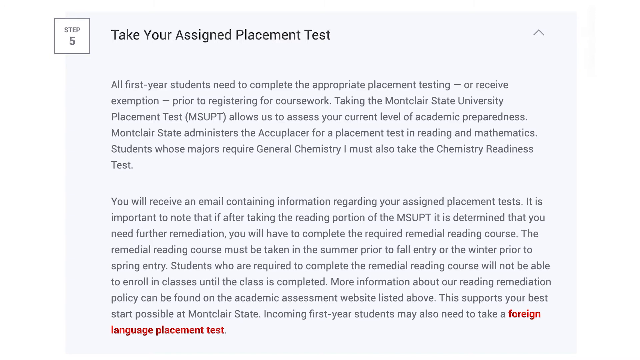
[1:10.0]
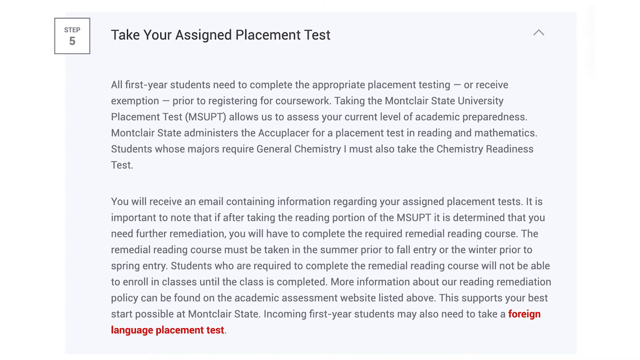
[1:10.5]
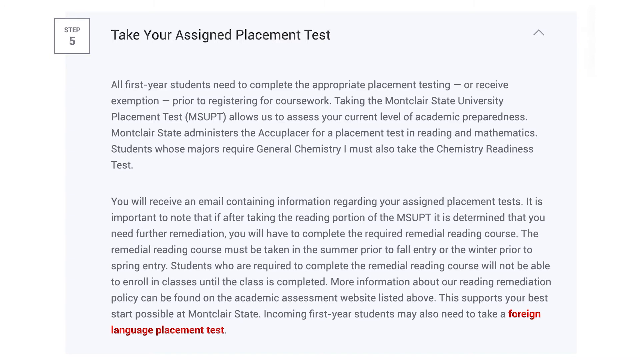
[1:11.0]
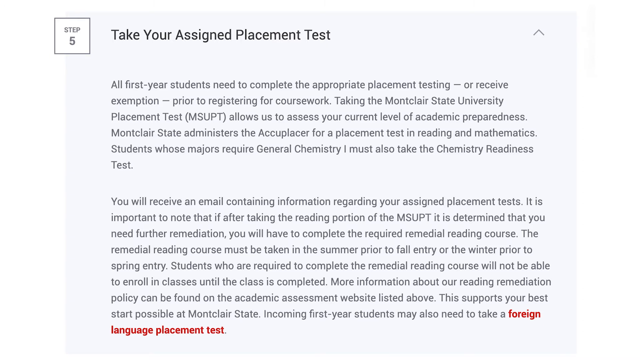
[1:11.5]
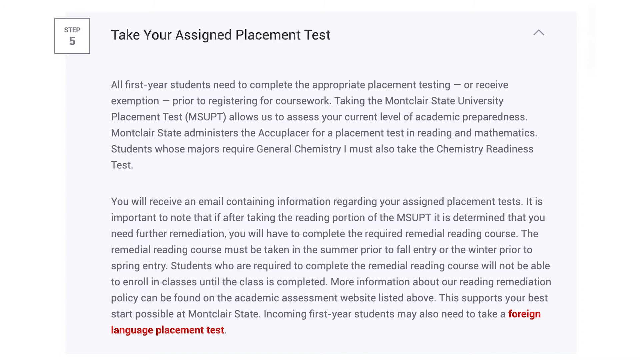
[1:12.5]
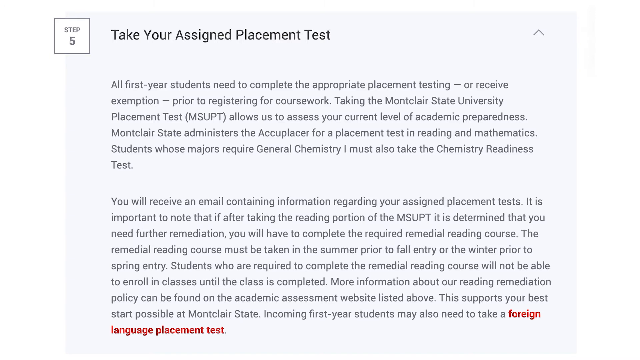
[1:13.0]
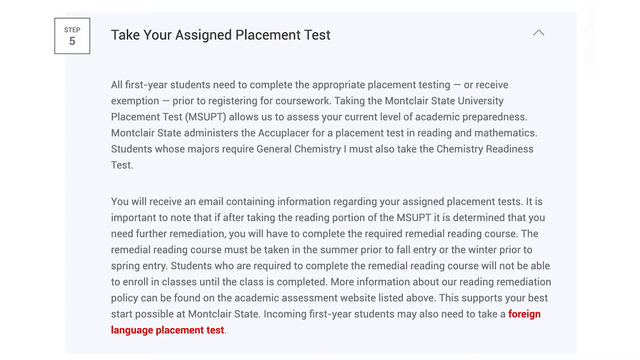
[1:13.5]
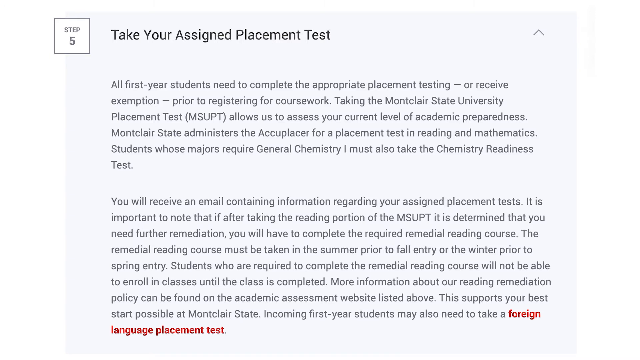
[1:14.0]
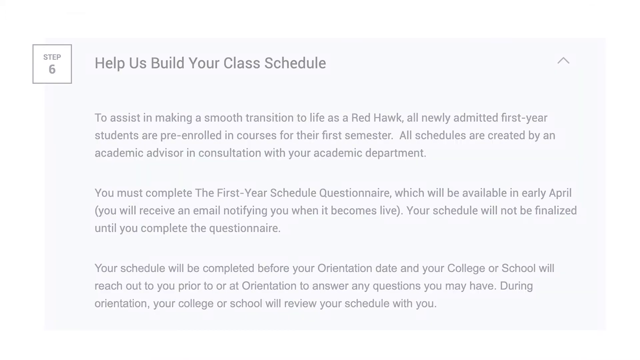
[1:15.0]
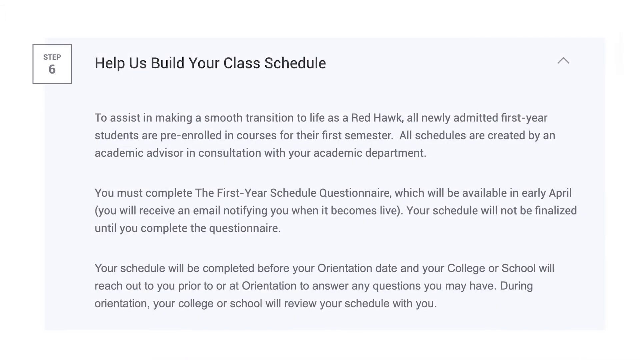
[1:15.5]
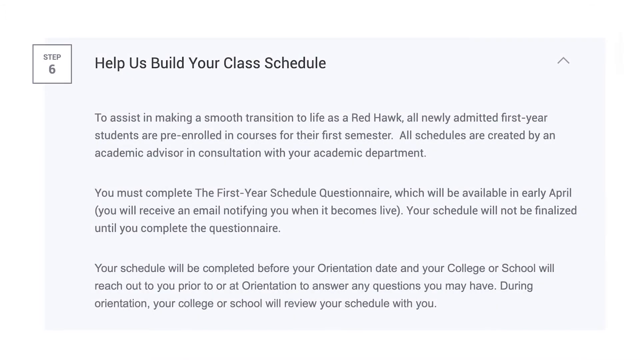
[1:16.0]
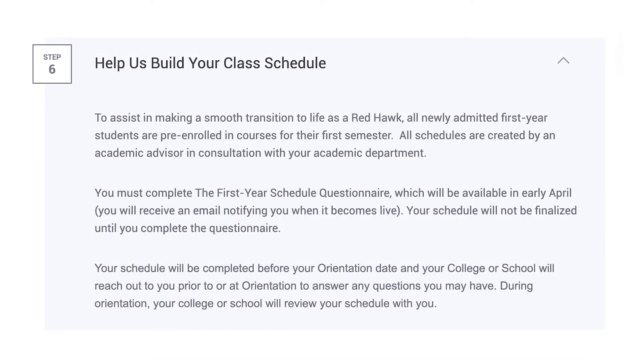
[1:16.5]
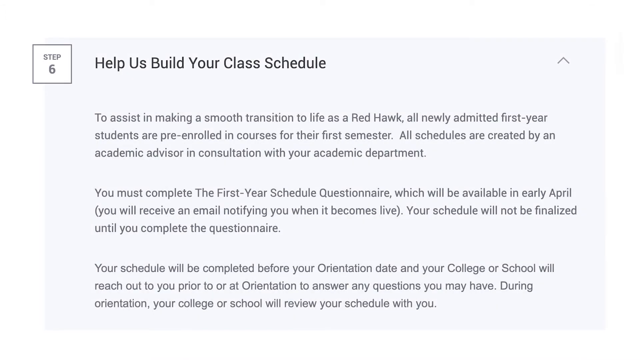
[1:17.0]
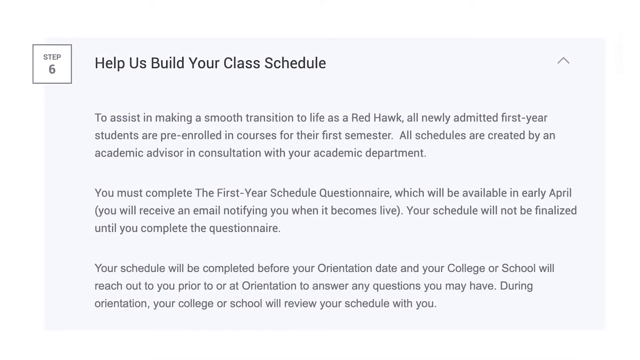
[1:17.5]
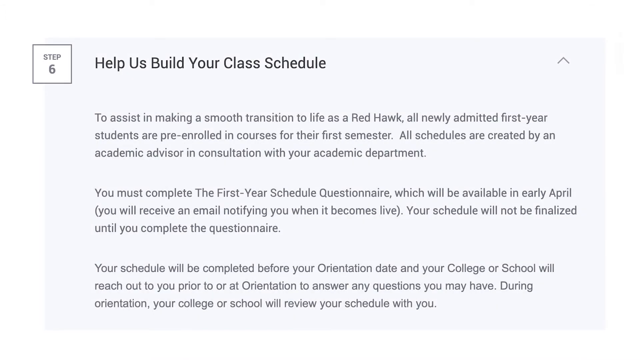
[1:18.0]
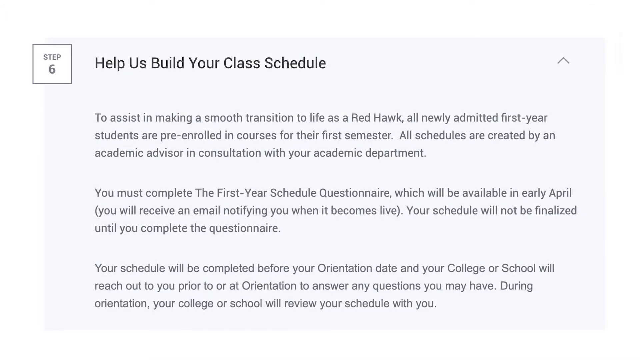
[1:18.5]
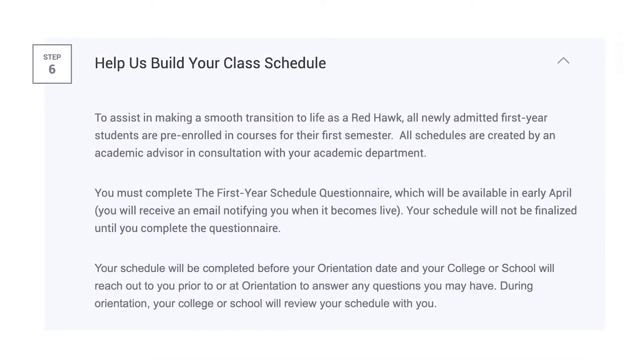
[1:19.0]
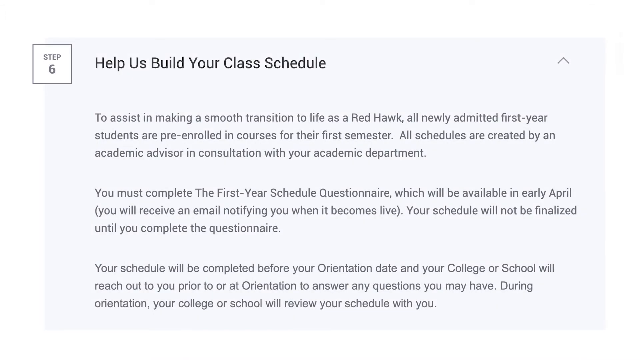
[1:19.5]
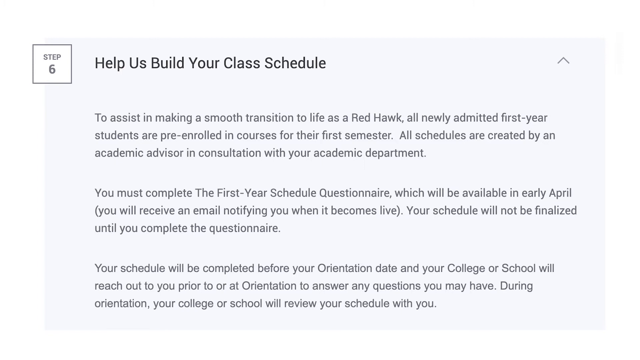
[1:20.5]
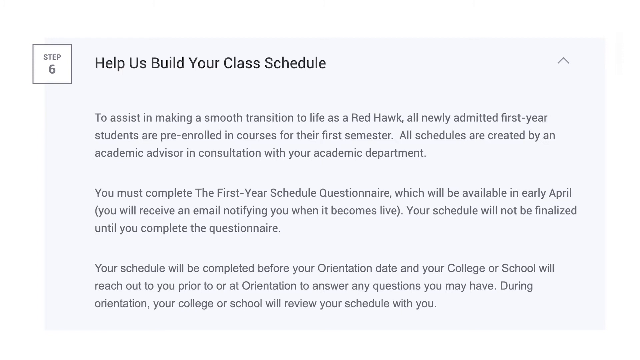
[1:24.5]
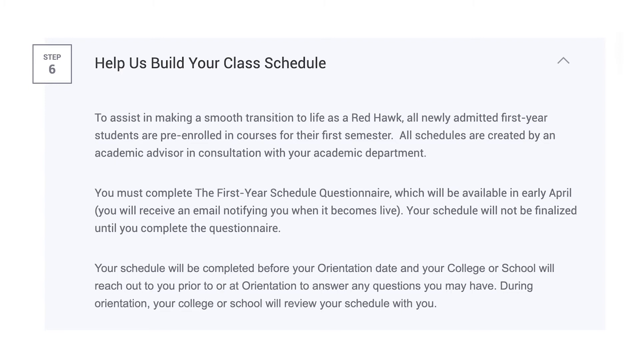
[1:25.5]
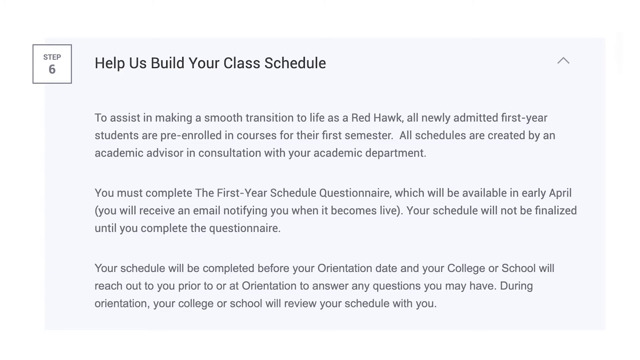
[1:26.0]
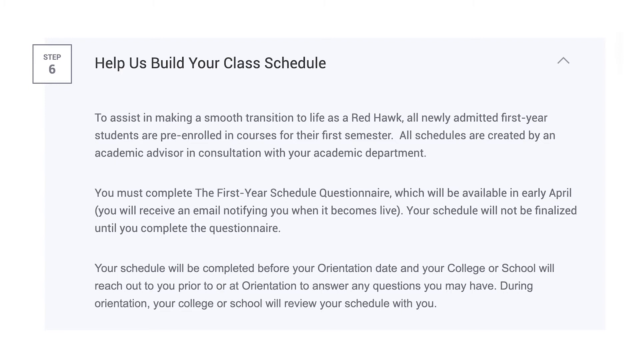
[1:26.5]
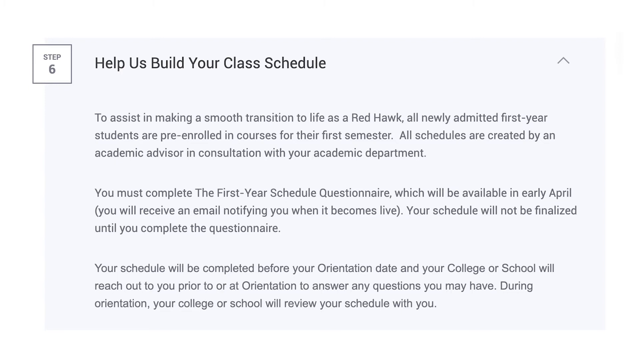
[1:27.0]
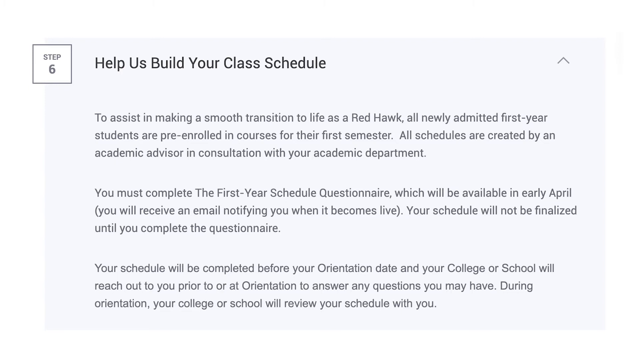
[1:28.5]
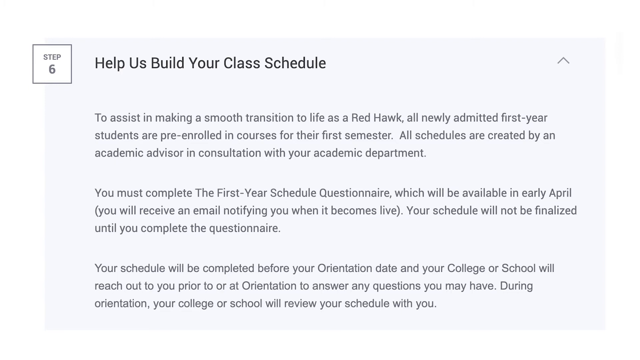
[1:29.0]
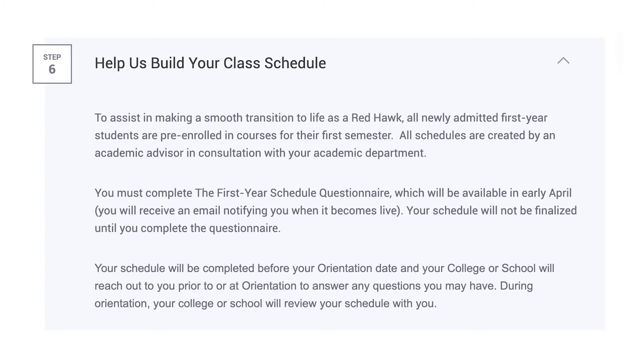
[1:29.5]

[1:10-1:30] Step 6 is about getting new students' class schedules ready. Montclair State University creates the first-semester schedule for students, with an academic advisor building it based on each student's needs and major. To get started, students must fill out the first-year schedule questionnaire, covering things like course preferences and academic background, which becomes available in early April; students will get an email when it is ready. The video makes clear that the schedule won't be finished until the questionnaire is submitted. Once the form is done, students receive their schedule before orientation, where they can review it with someone from their college or school.